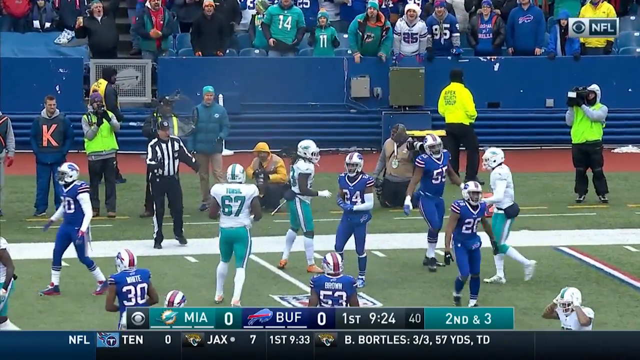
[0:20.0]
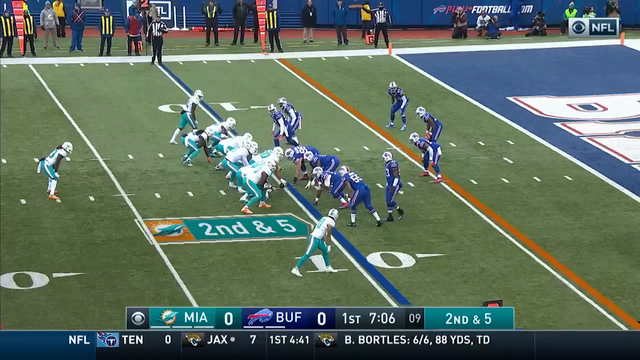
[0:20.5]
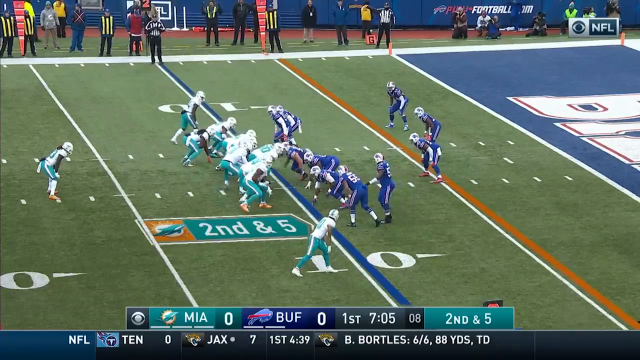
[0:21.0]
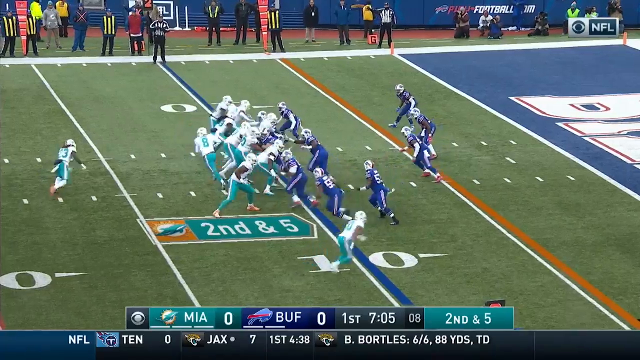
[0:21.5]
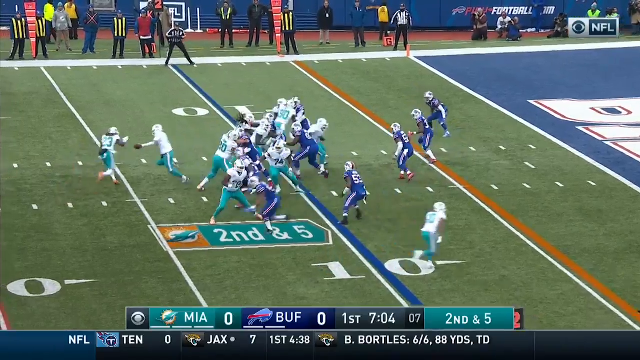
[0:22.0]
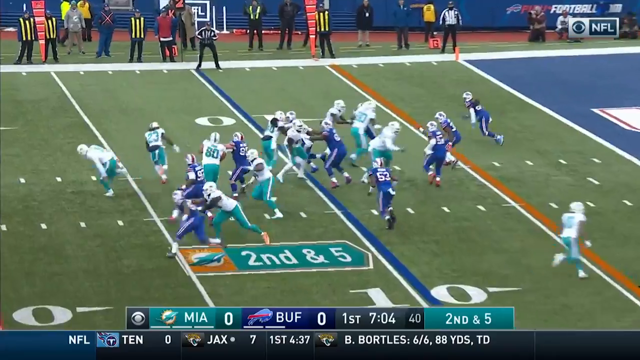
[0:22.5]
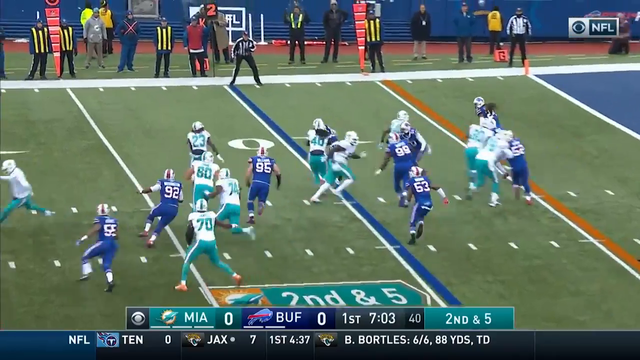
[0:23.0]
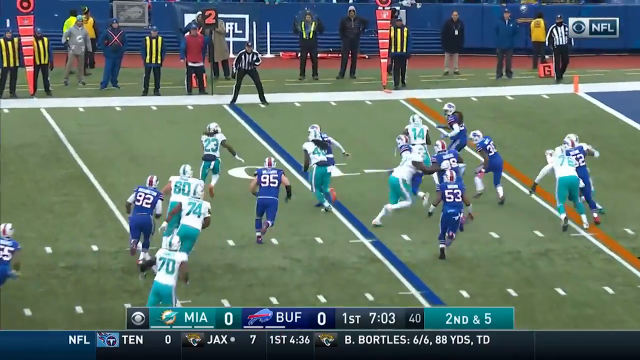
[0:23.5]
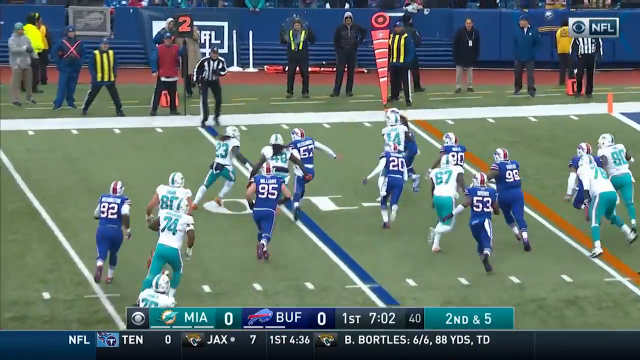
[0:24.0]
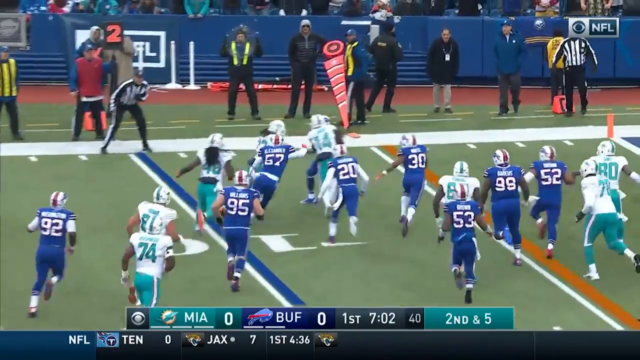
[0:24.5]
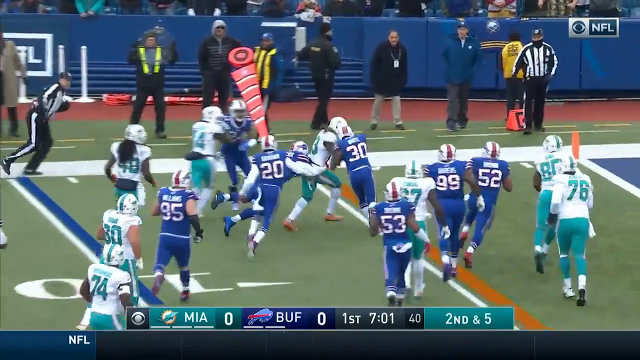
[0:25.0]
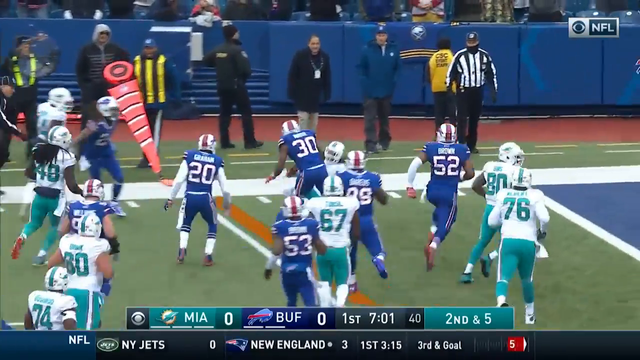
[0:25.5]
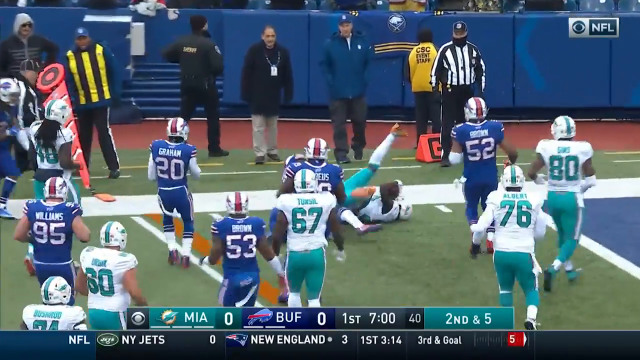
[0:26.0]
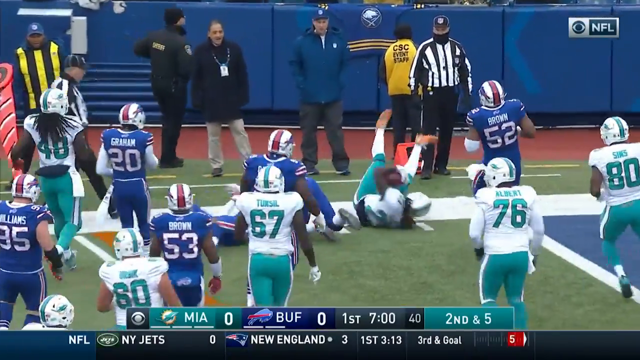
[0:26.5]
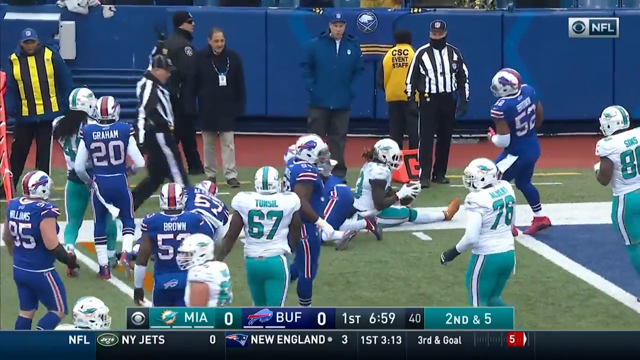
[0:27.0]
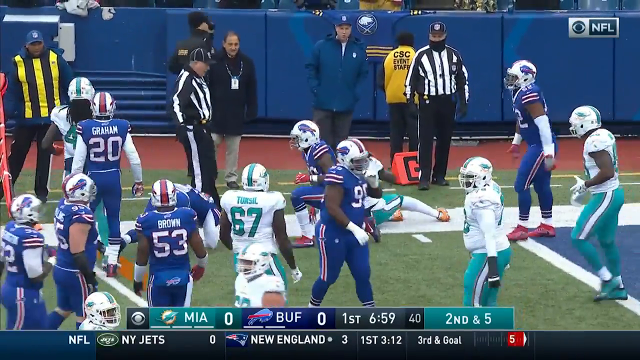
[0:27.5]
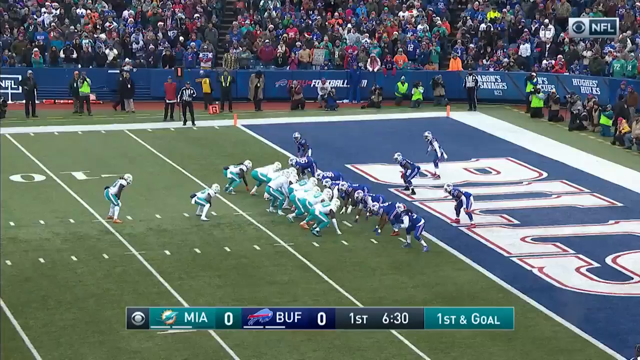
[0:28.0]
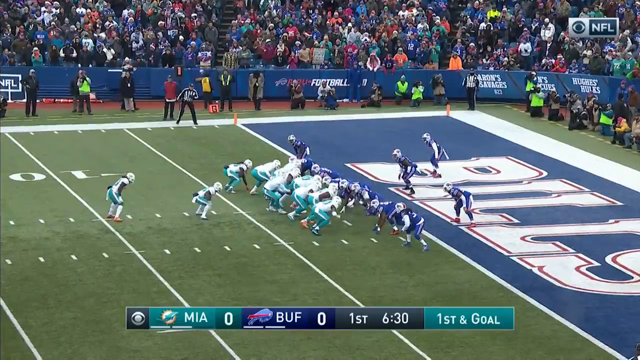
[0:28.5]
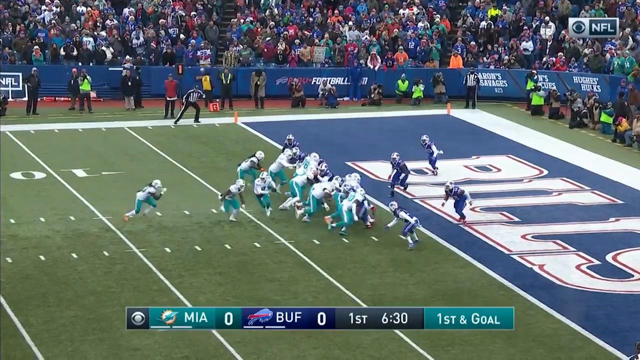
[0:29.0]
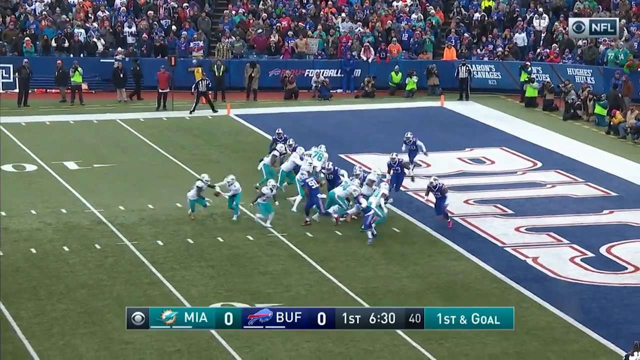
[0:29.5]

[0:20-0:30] Highlights continue from an NFL game between Florida and the Buffalo Bills, focused on Miami's offense. Florida wears a predominantly white uniform with some green. The day looks very cold, and the game appears to be in Buffalo. The plays show the quarterback handing off to a running back who charges around the defense. On one run the player gets very close to the end zone but is bumped out of bounds. In another play, near the end zone with the word "Bills" visible in it, the quarterback hands off to a player with dark skin and long black hair, who is hit by a Buffalo Bills defender. The word "NFL" and a network logo appear in the top right corner, and the bottom of the screen shows the score with the team names and logos: Miami 0, Buffalo 0.